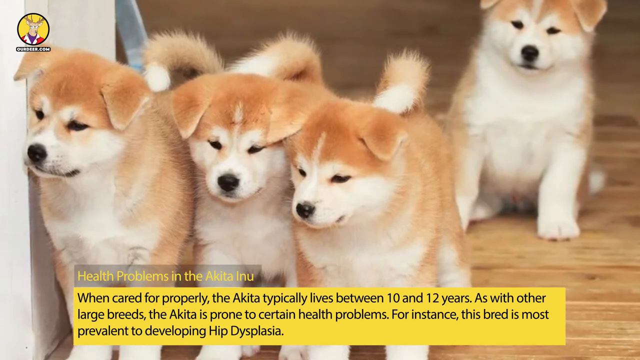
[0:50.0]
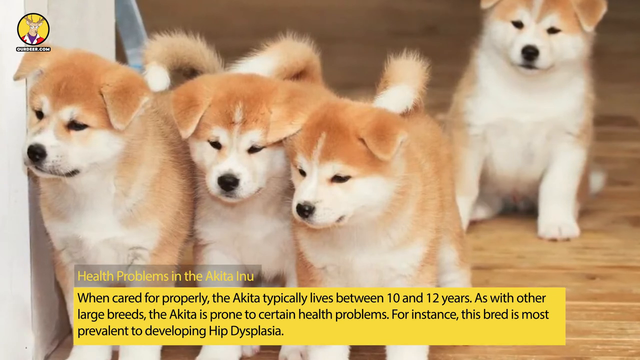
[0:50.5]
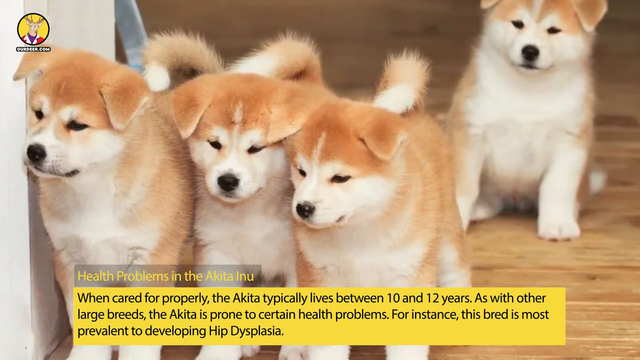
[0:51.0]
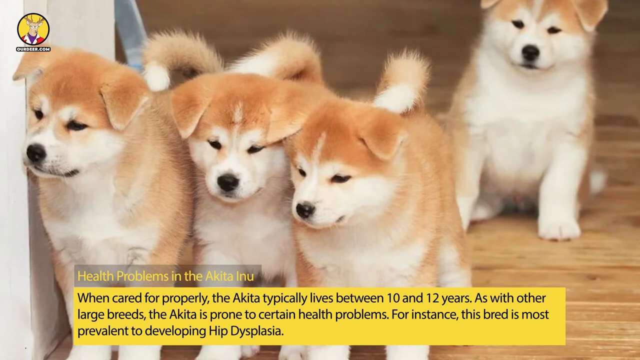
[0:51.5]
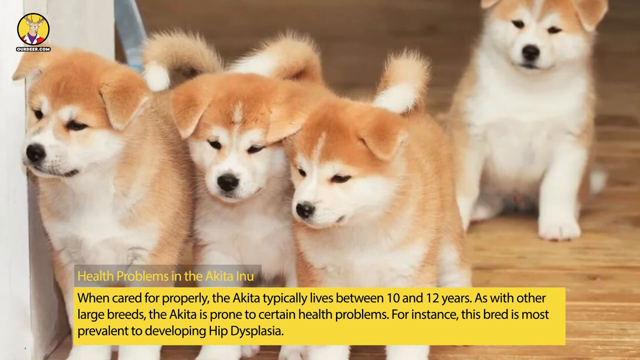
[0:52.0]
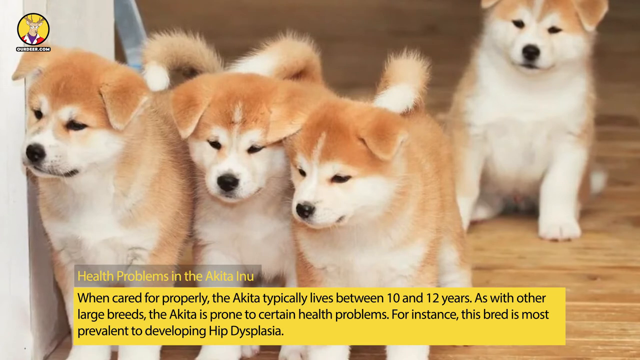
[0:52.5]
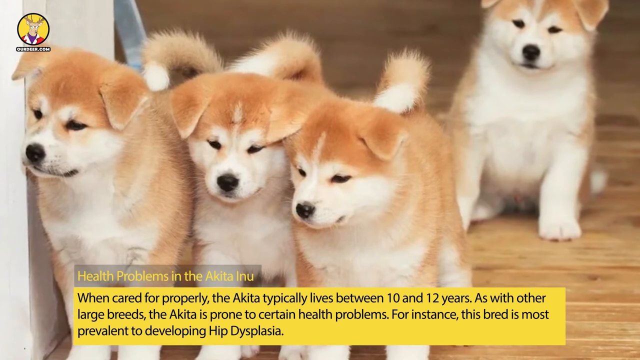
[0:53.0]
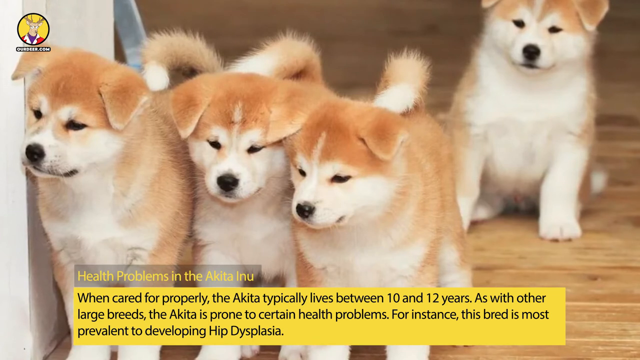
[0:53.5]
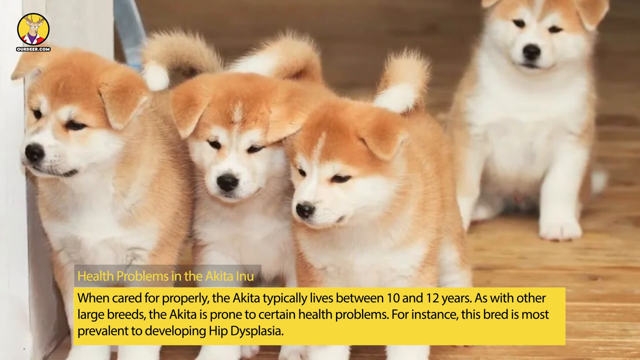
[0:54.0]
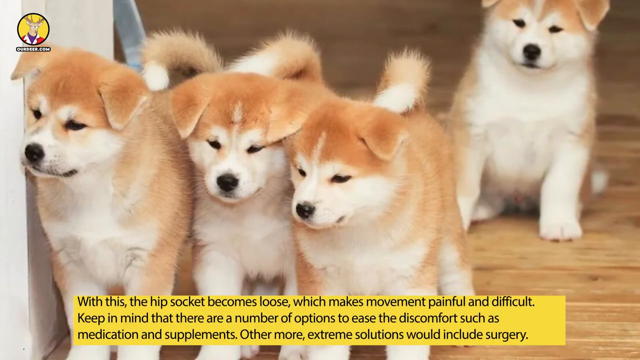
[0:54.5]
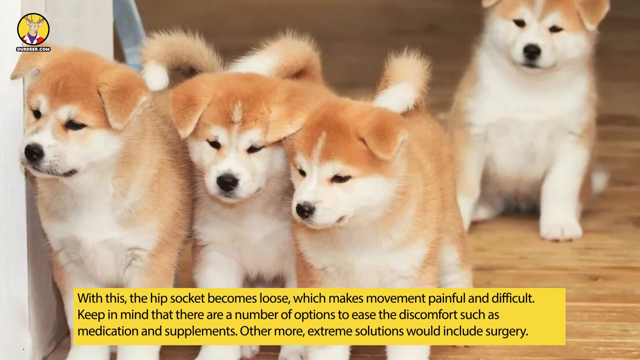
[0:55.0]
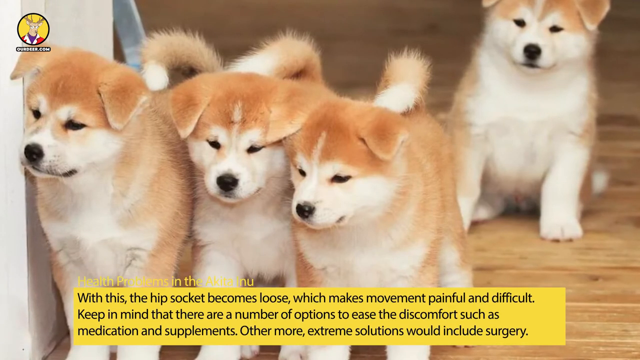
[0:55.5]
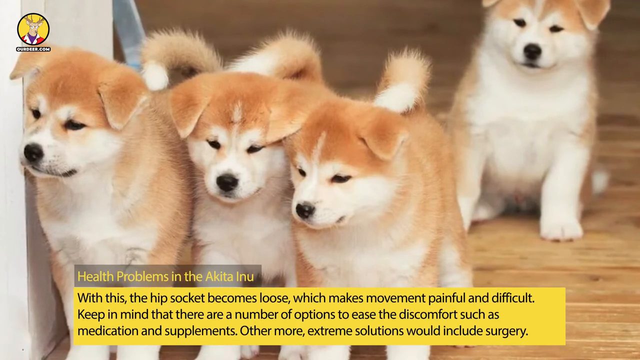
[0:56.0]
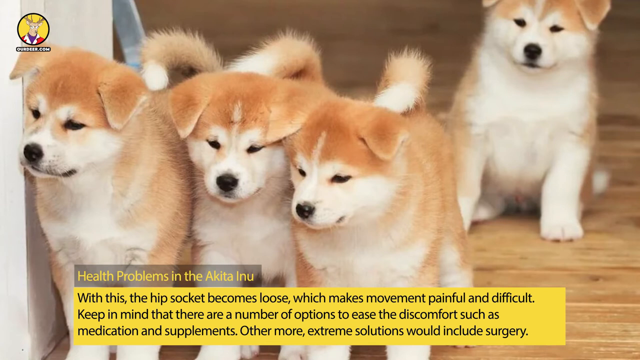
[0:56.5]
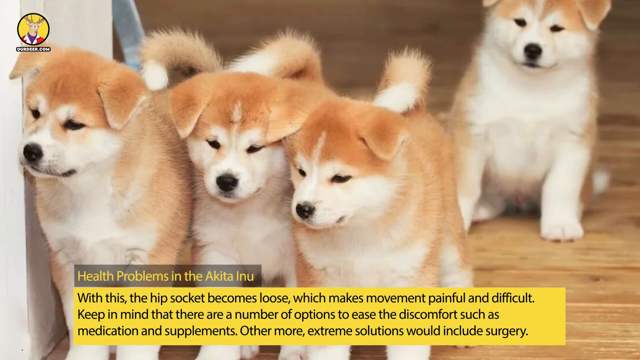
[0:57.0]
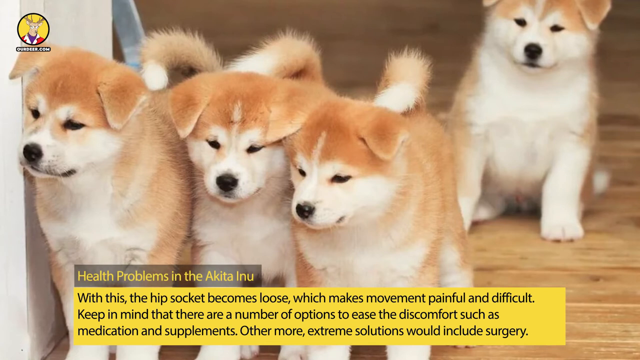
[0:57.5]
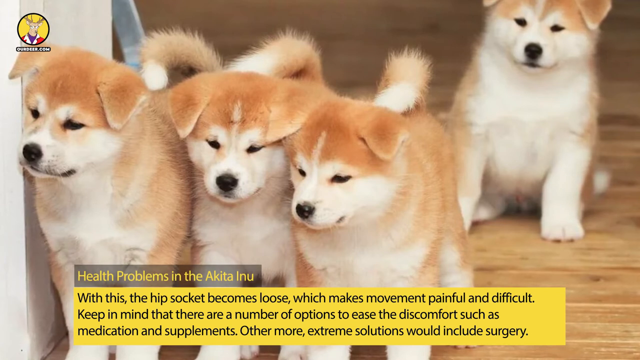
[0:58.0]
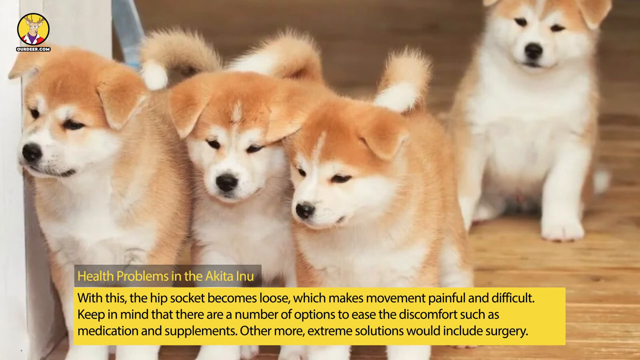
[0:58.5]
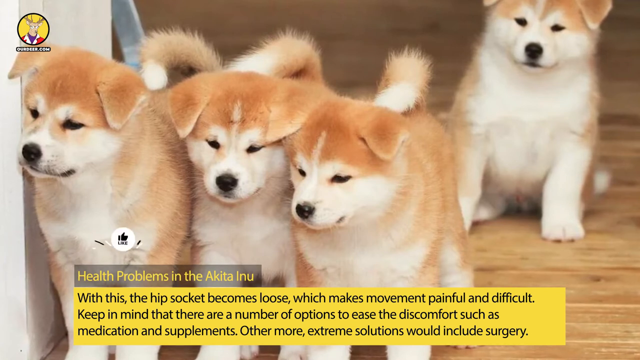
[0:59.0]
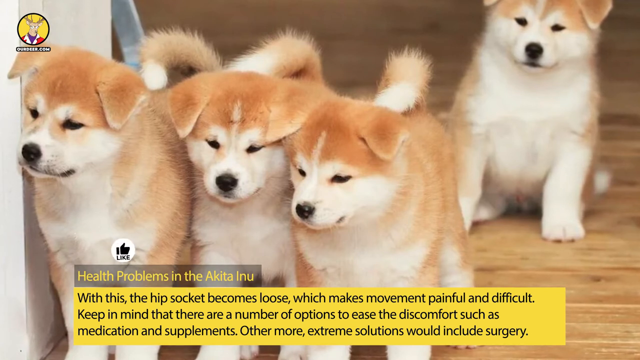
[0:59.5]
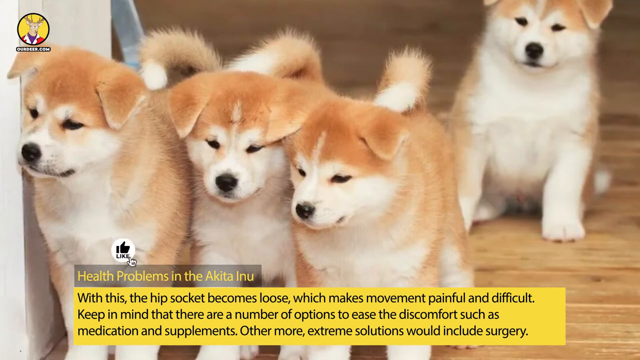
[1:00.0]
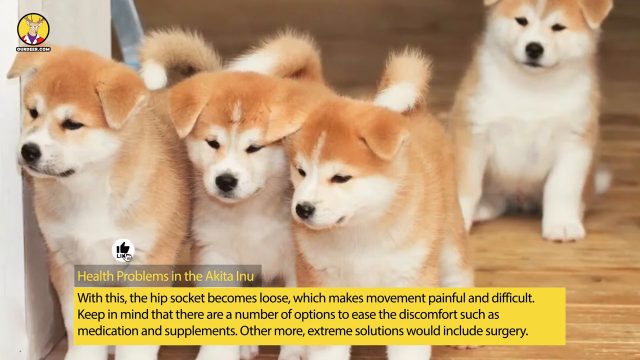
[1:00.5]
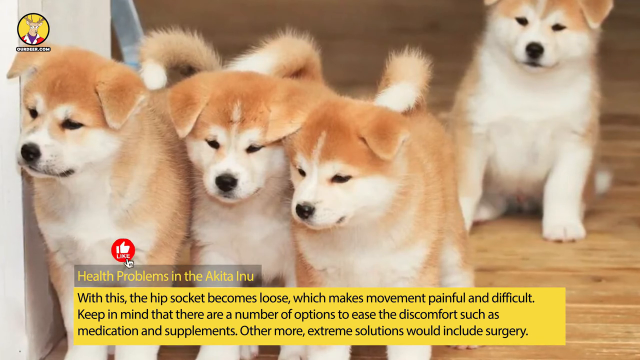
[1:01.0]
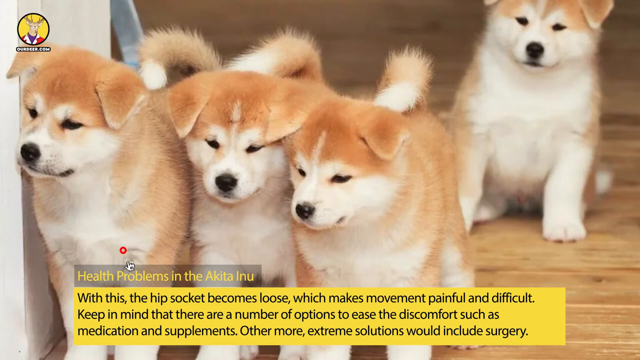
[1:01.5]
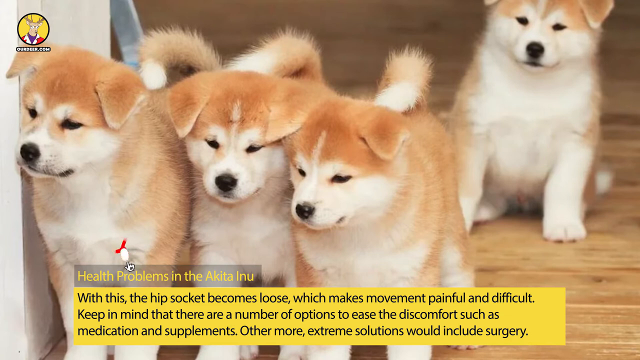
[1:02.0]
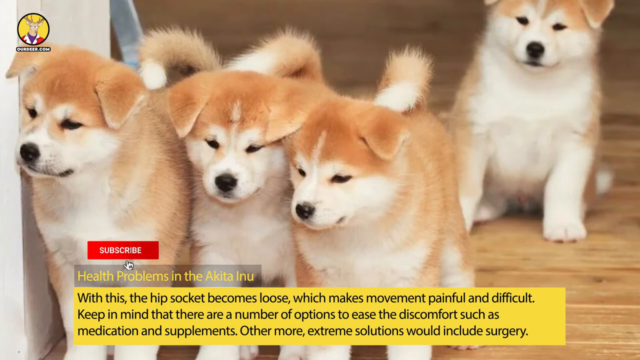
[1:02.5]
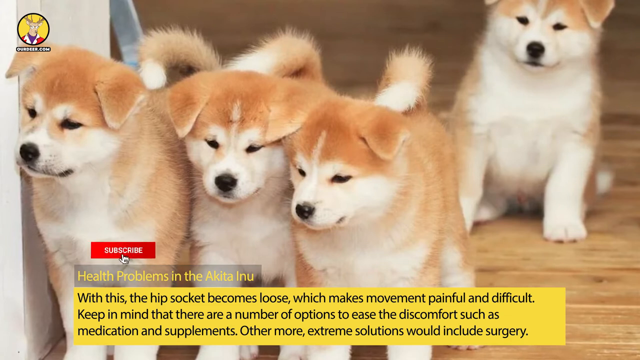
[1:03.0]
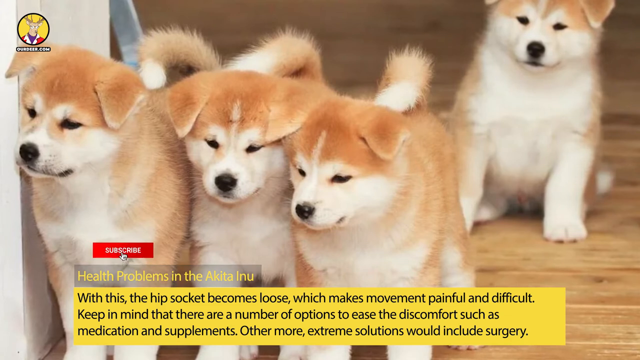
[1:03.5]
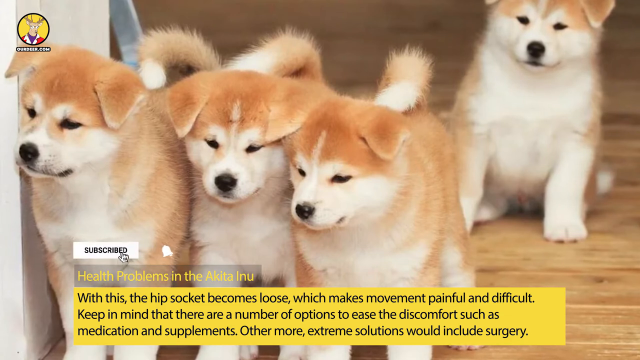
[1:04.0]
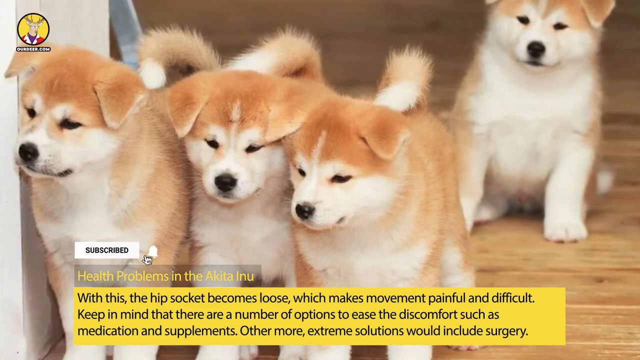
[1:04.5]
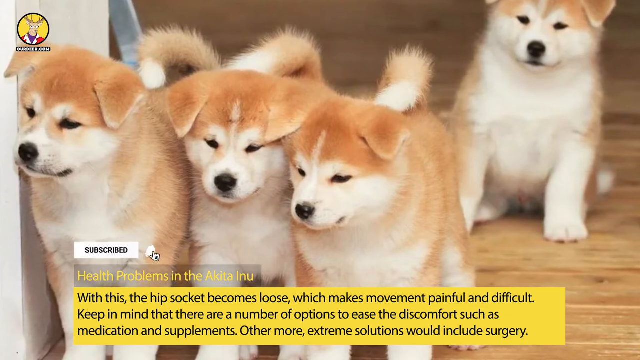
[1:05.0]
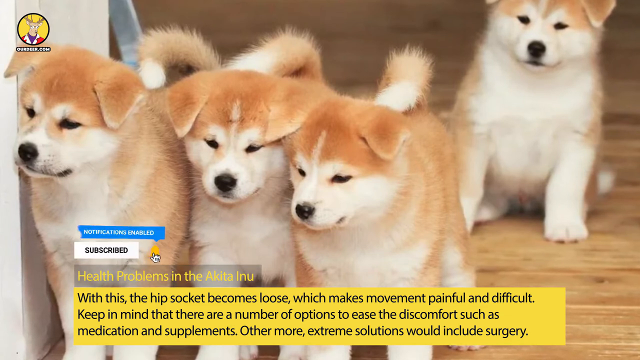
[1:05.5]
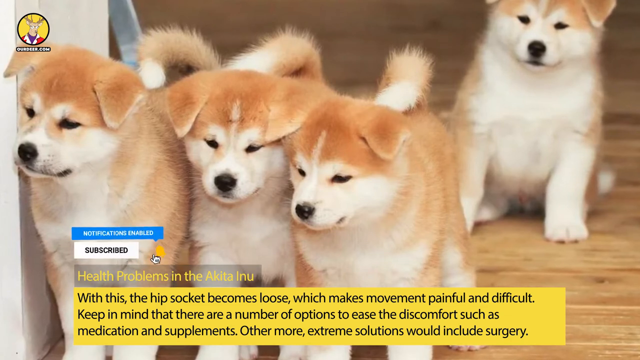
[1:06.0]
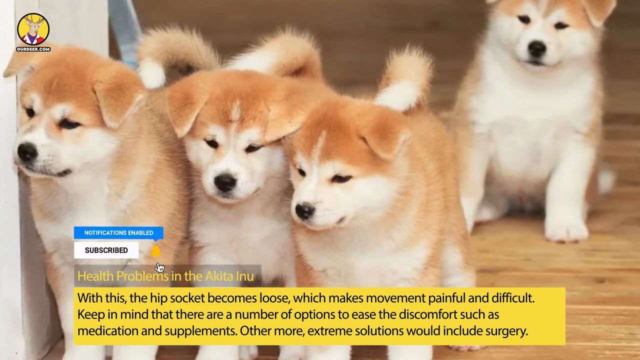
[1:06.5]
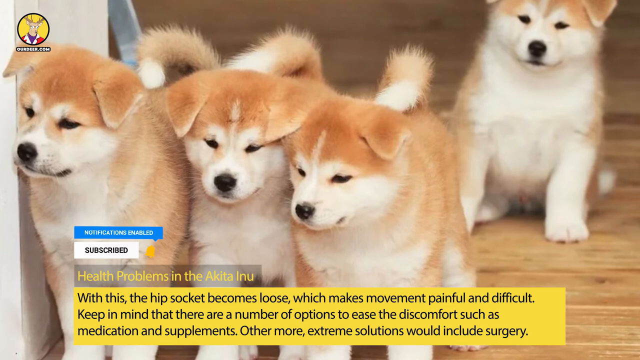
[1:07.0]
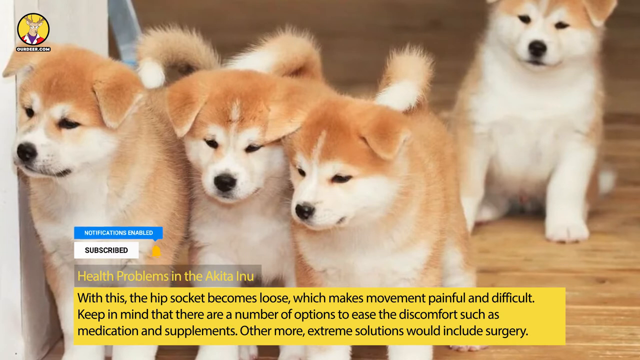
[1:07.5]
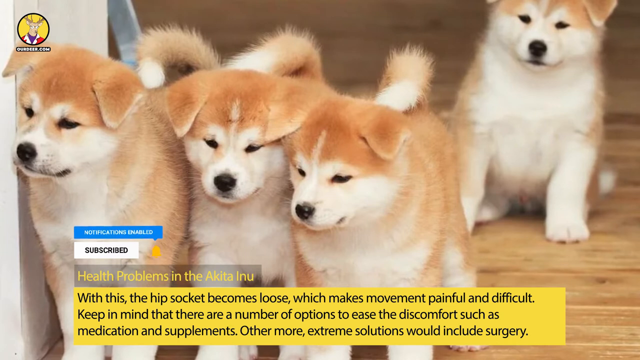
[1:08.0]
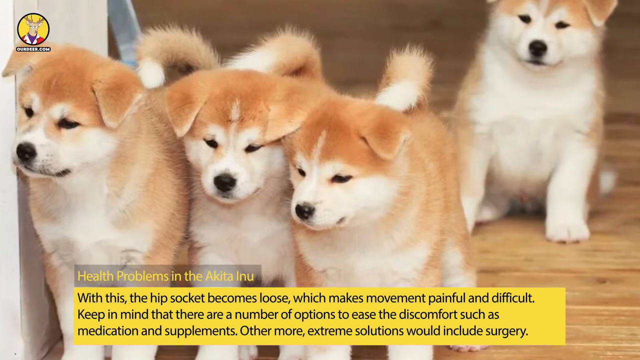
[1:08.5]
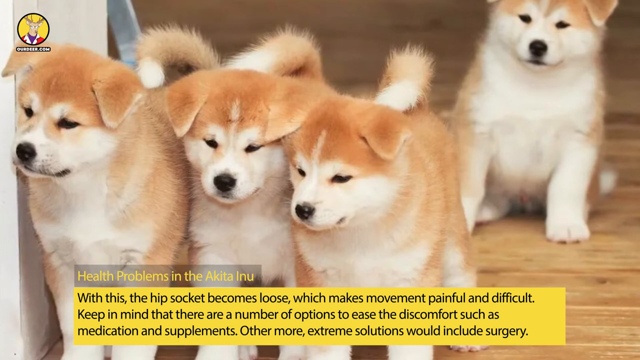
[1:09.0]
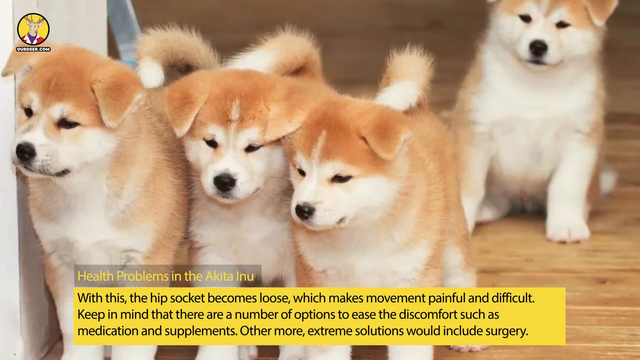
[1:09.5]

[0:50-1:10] The picture of puppies is on screen with the text "when cared for properly, the Akita typically lives between 10 and 12 years. As with other large breeds, Akita is prone to certain health problems. For instance, this breed is most prevalent for developing hip dysplasia." The text changes to "with this the hip socket becomes loose which makes movement painful and difficult keep in mind that there are a number of options to ease the discomfort such as medication and supplements other more extreme solutions would include surgery". A circle pops up with a like thumb and a subscribe button, and text reads "notifications enabled". The view then returns to the screen with the little puppies.